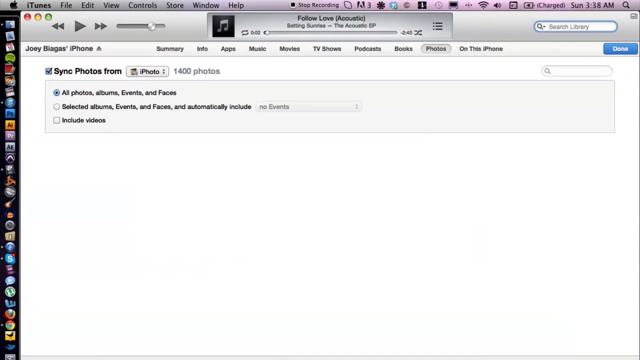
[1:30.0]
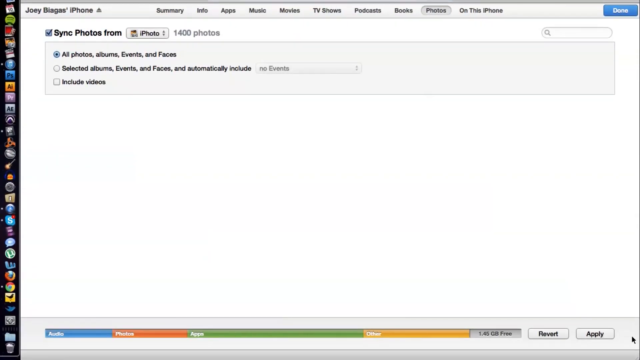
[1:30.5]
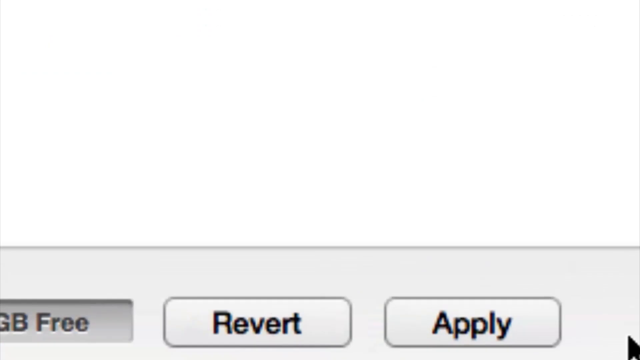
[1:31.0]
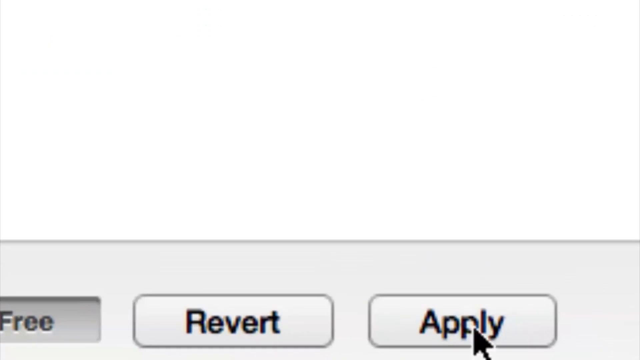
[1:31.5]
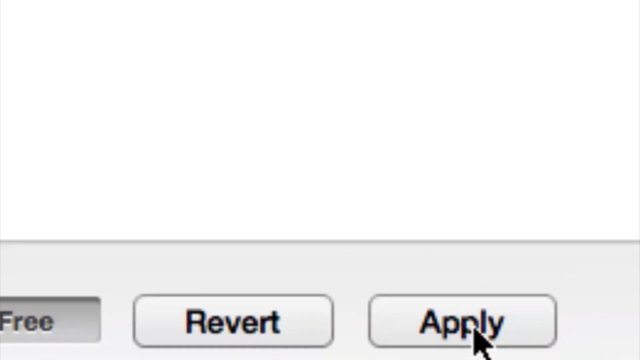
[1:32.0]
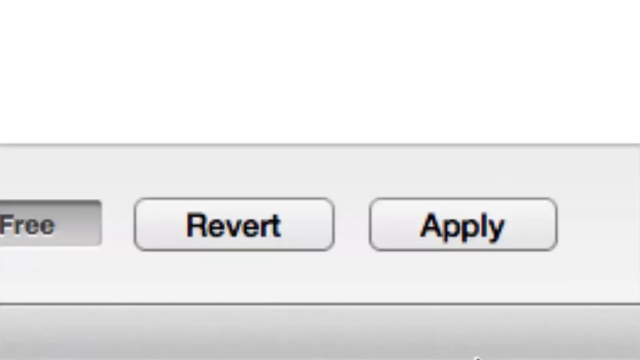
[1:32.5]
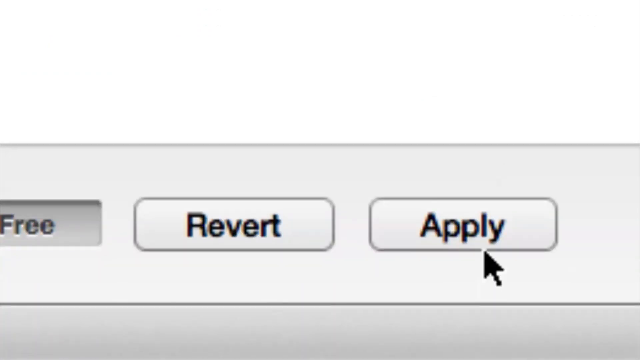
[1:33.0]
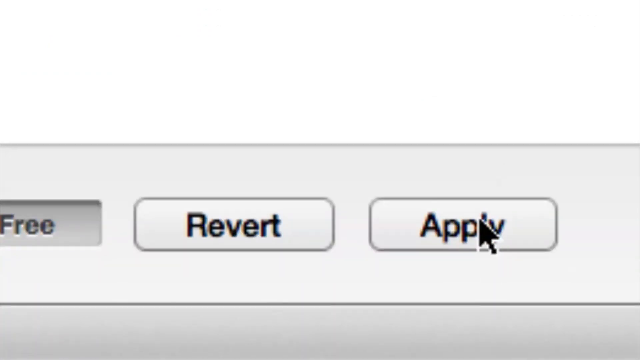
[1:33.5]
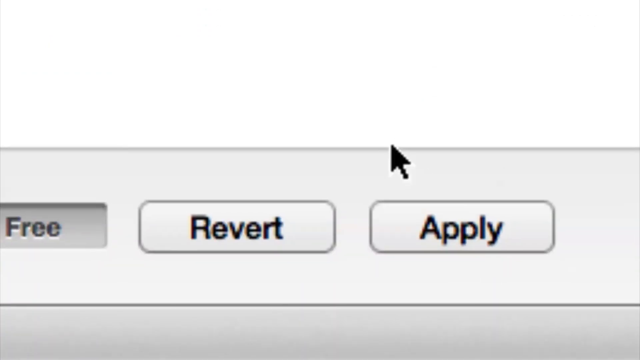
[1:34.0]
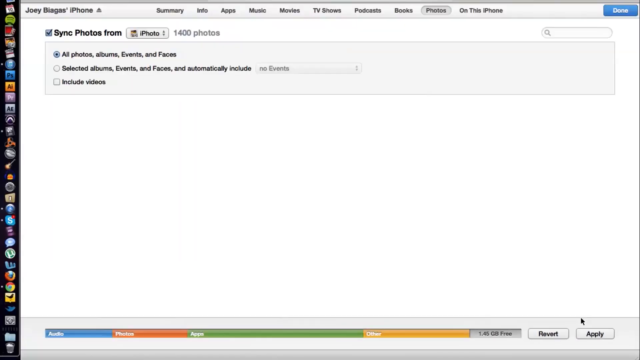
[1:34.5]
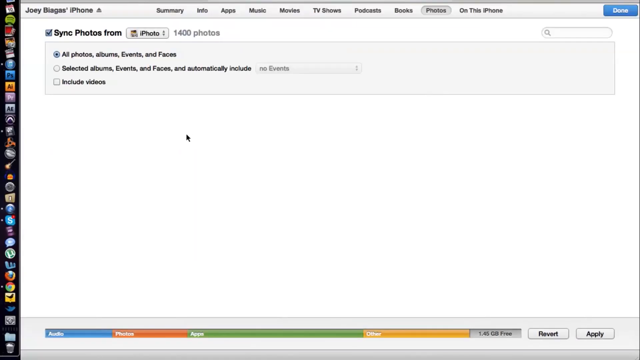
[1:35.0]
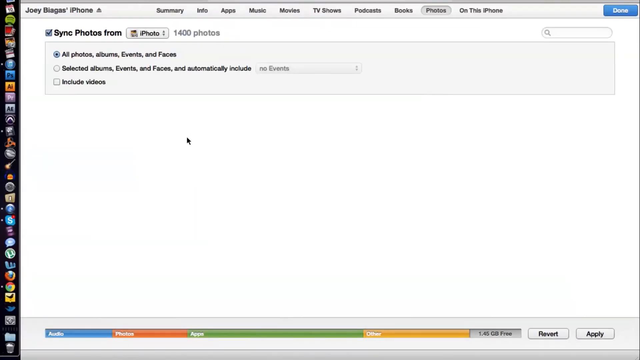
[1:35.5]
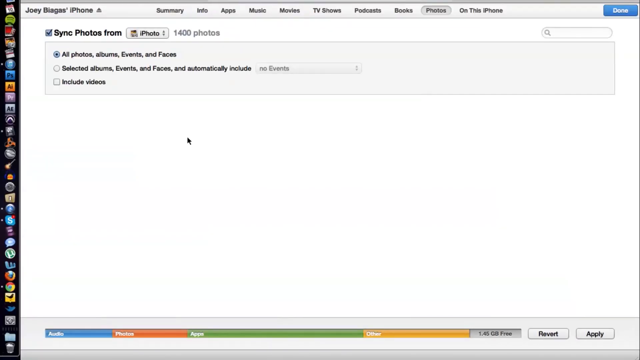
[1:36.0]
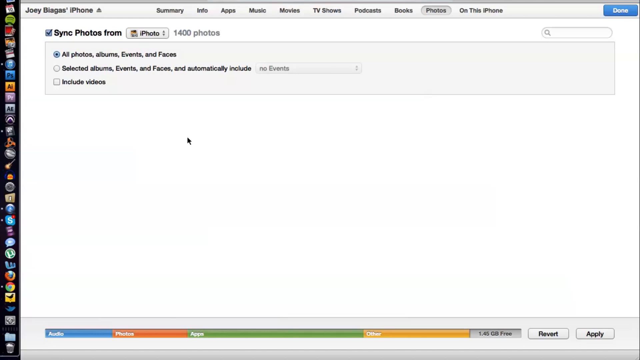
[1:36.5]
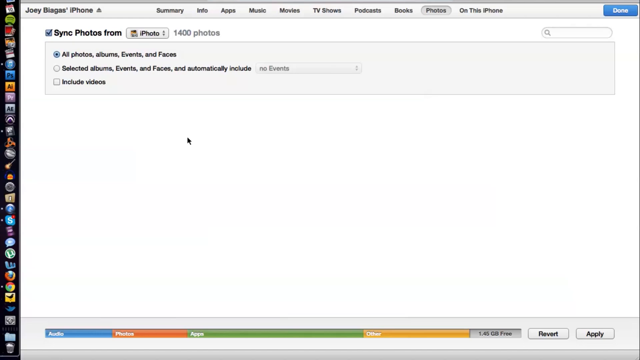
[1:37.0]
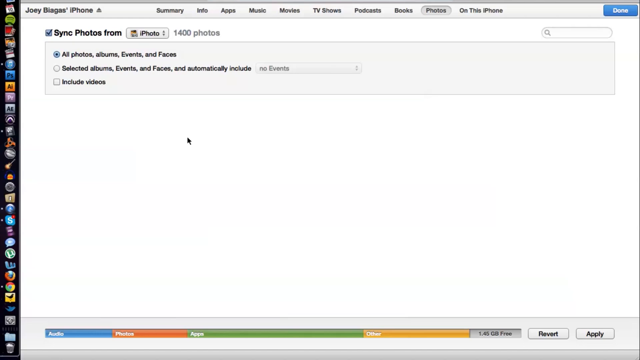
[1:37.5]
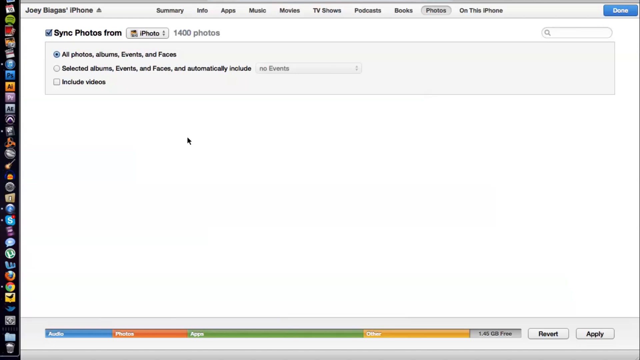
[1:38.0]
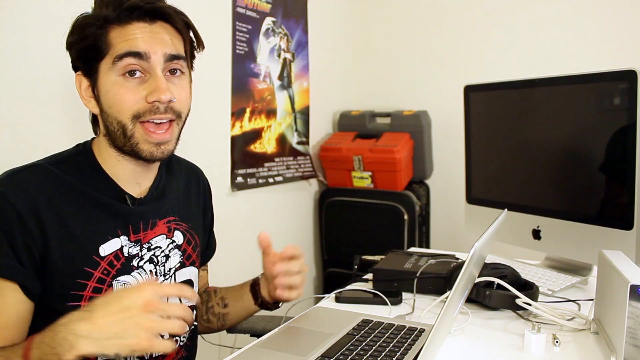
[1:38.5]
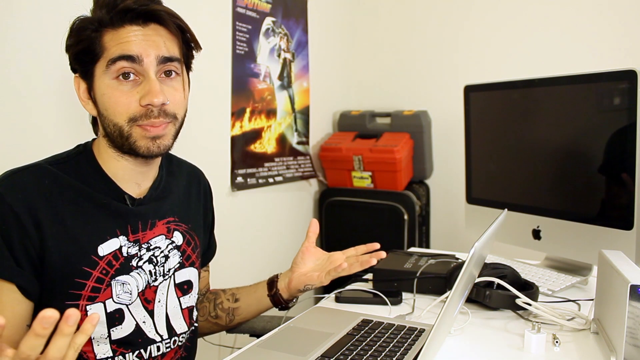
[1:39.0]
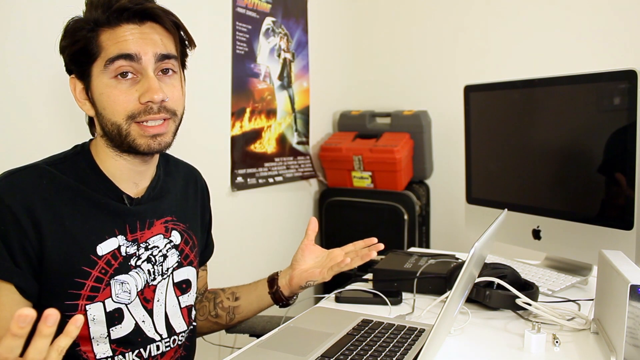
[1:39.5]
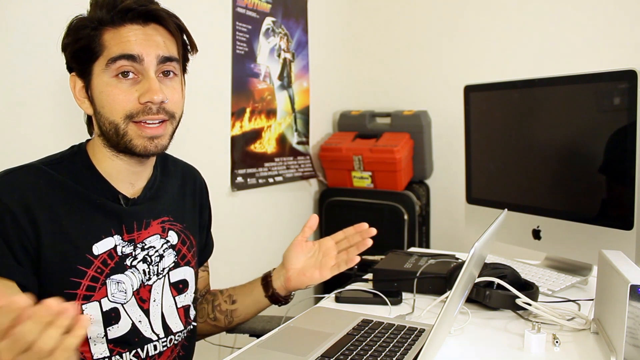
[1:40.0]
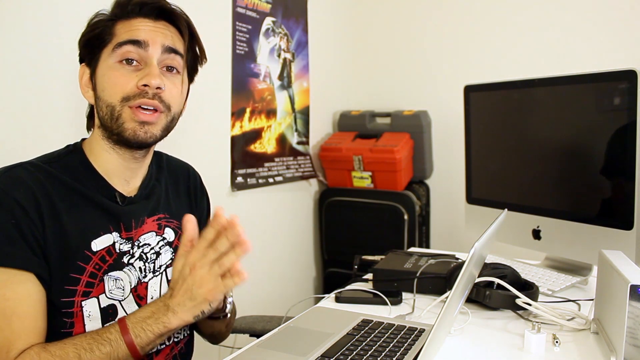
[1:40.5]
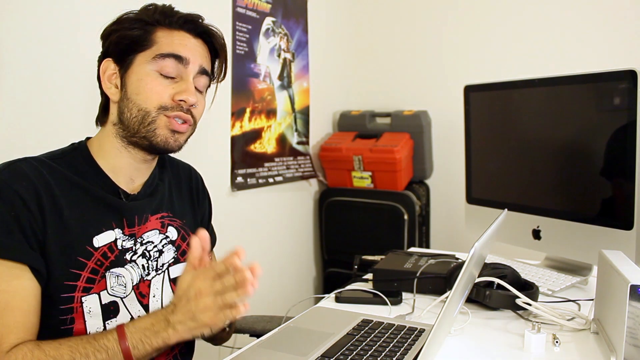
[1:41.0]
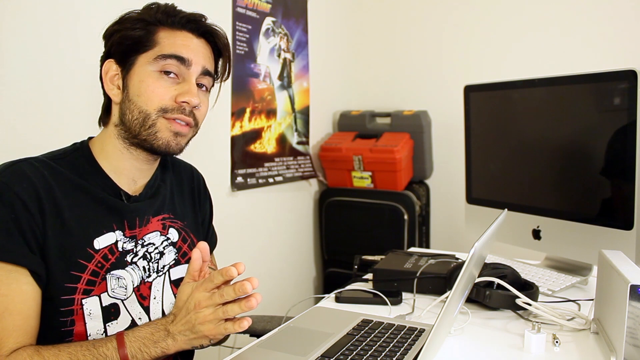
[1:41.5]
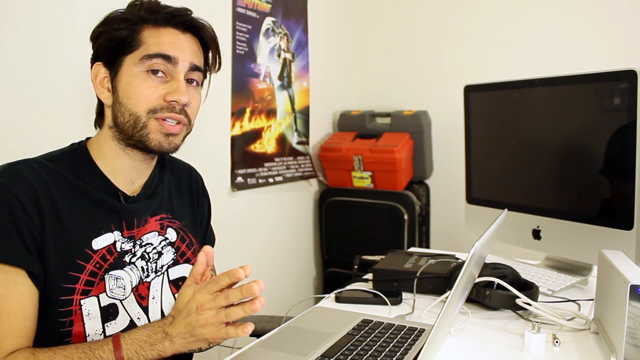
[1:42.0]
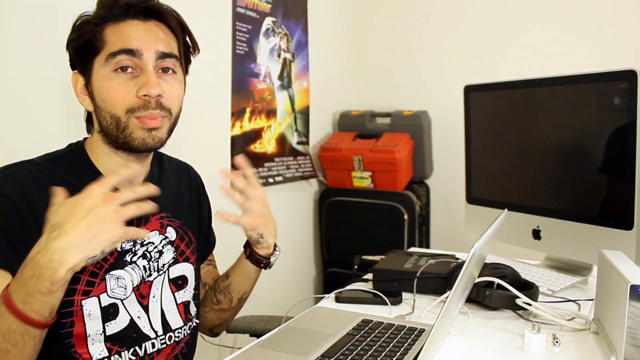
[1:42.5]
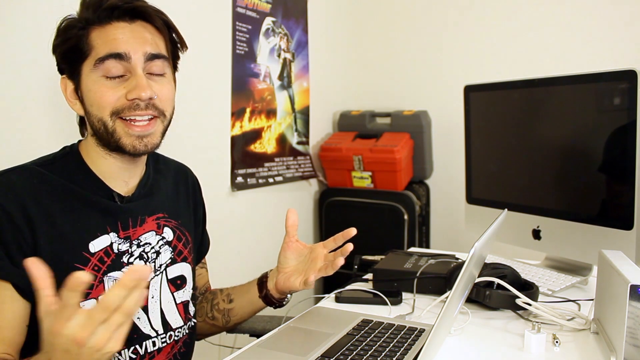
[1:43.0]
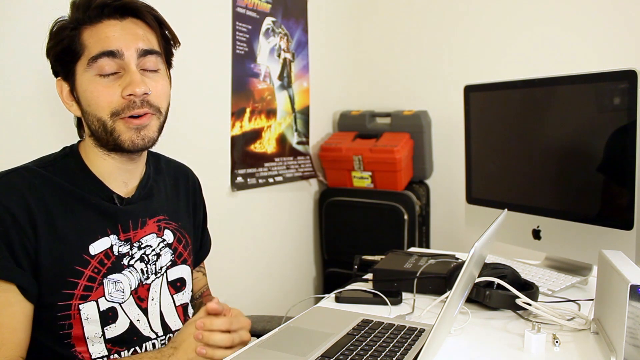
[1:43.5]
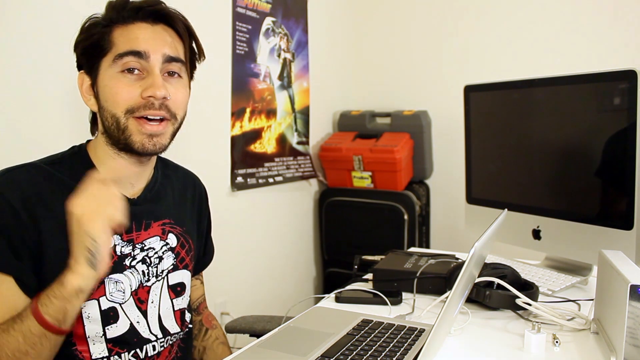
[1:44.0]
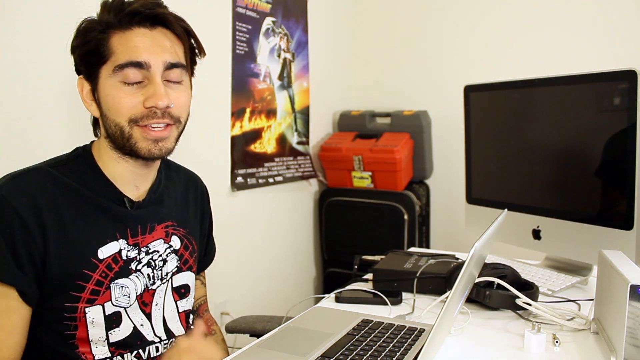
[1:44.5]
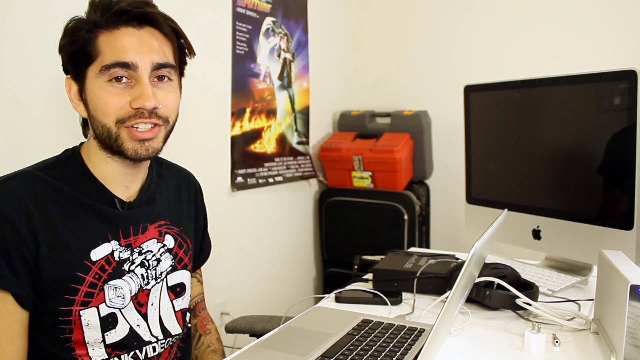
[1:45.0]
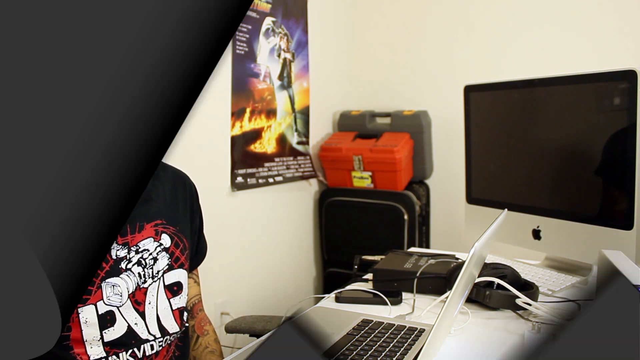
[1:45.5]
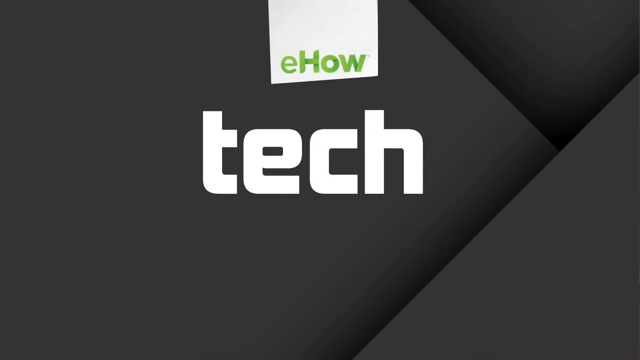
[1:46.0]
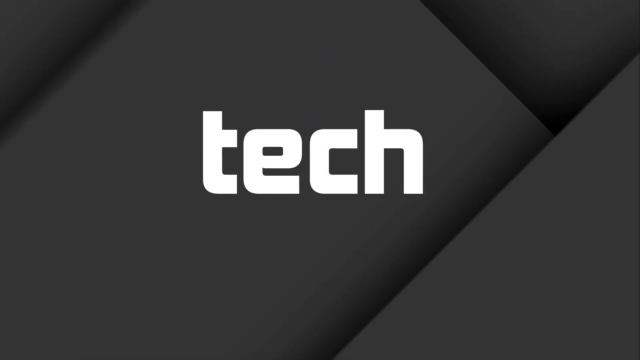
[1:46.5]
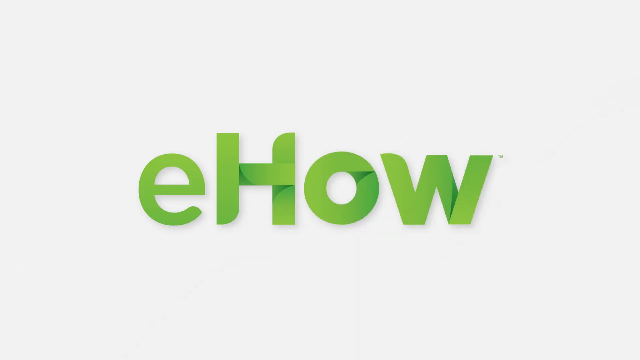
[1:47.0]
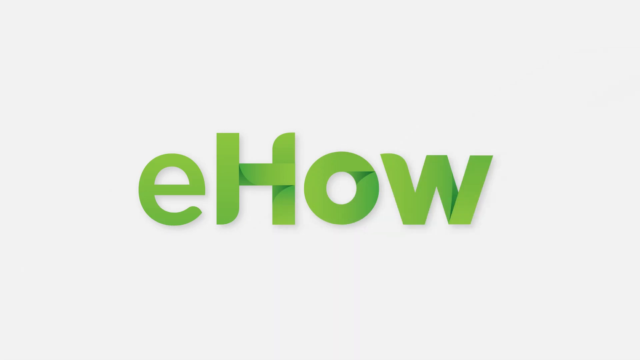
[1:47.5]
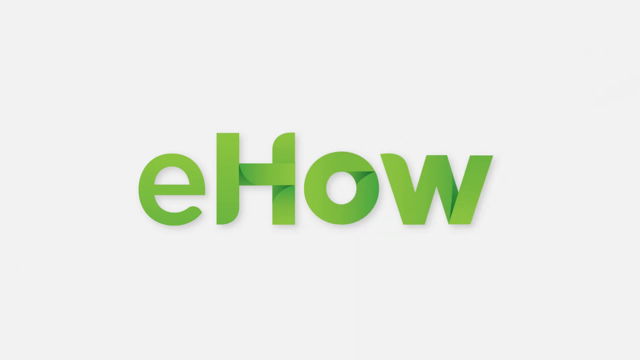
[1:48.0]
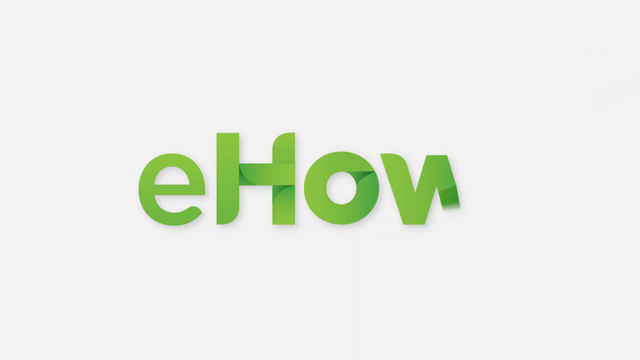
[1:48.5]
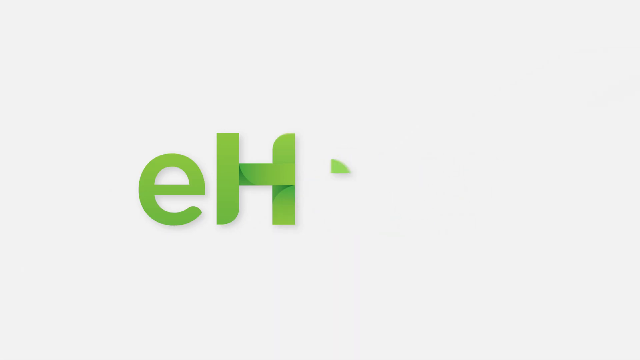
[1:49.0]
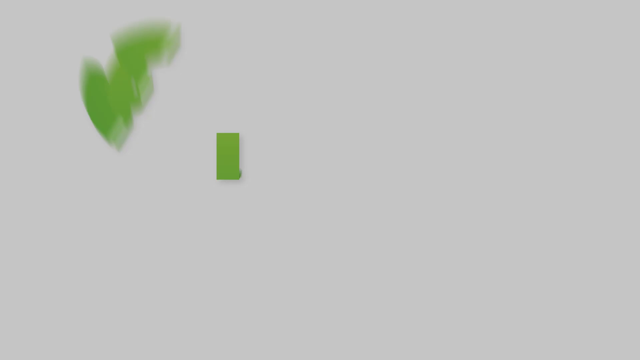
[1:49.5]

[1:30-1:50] The sync starts, and the YouTuber goes through a general roundup of the process.